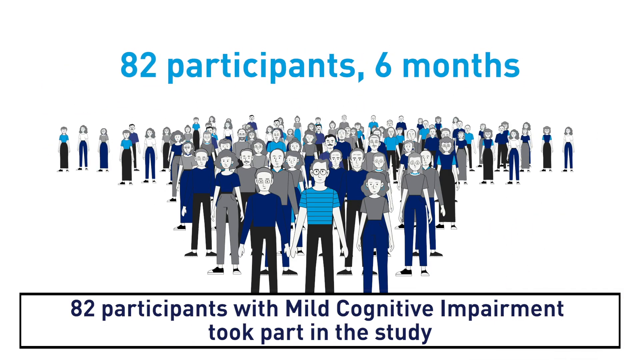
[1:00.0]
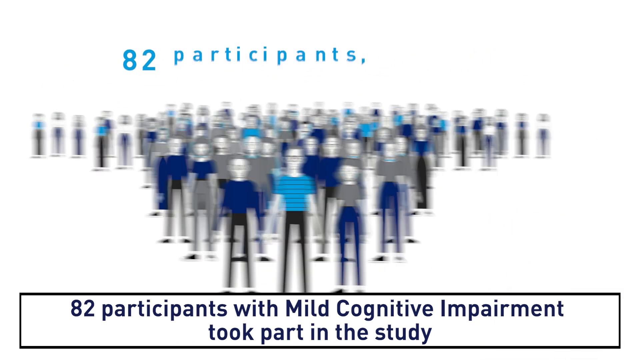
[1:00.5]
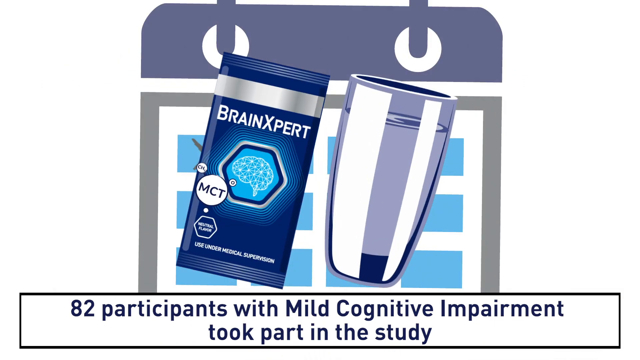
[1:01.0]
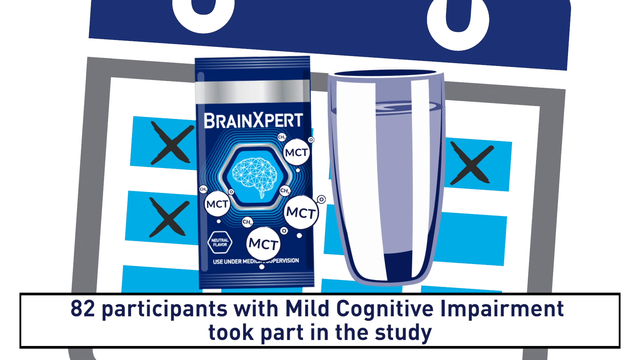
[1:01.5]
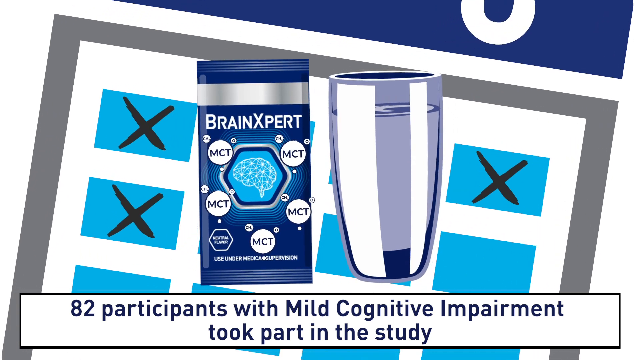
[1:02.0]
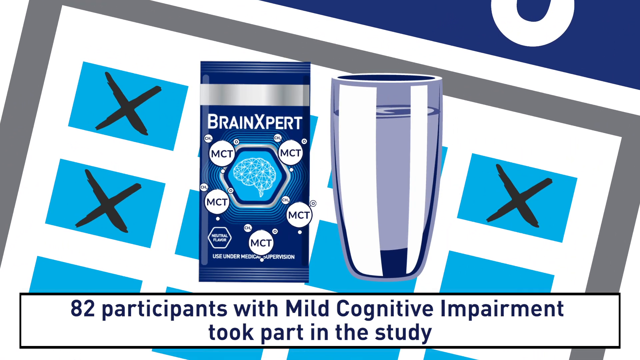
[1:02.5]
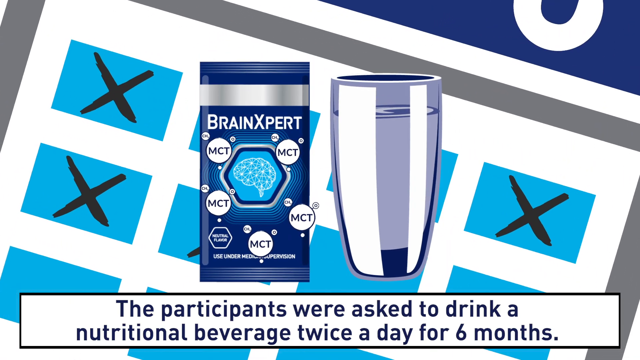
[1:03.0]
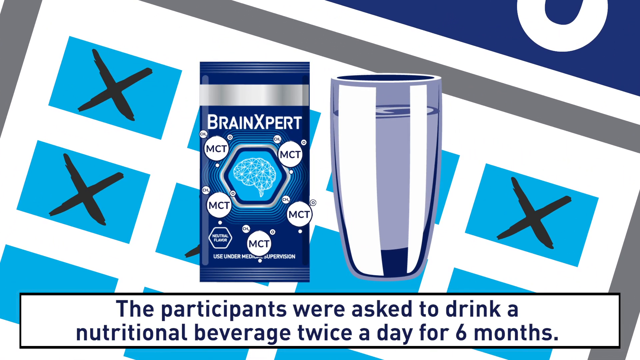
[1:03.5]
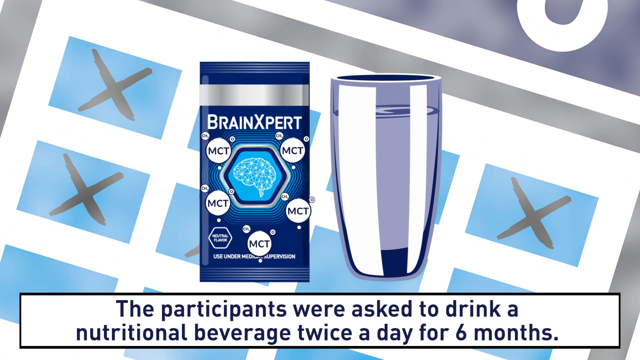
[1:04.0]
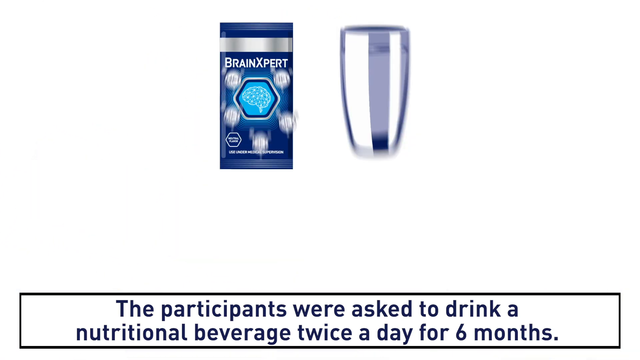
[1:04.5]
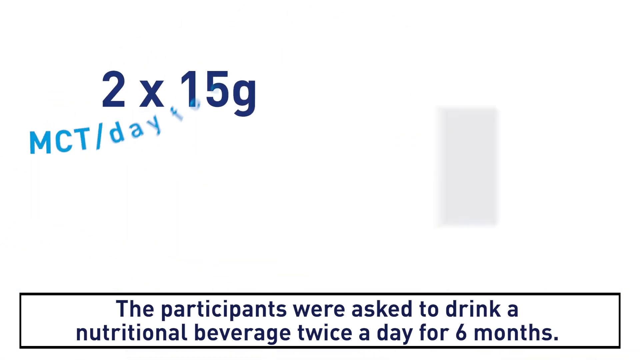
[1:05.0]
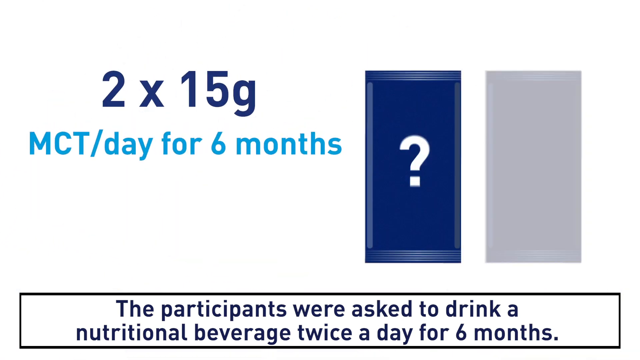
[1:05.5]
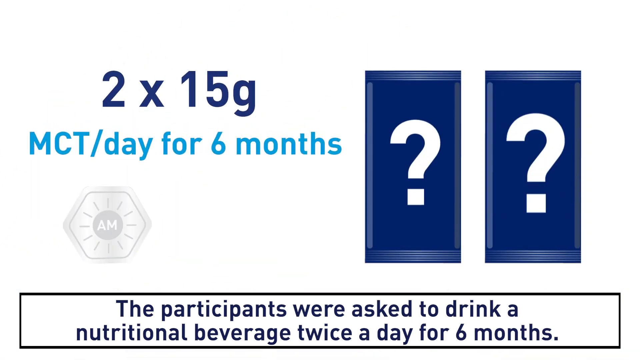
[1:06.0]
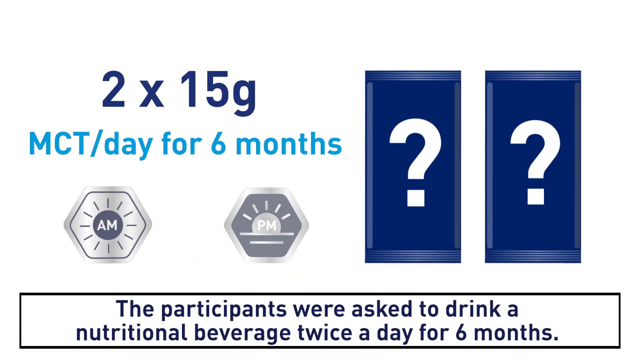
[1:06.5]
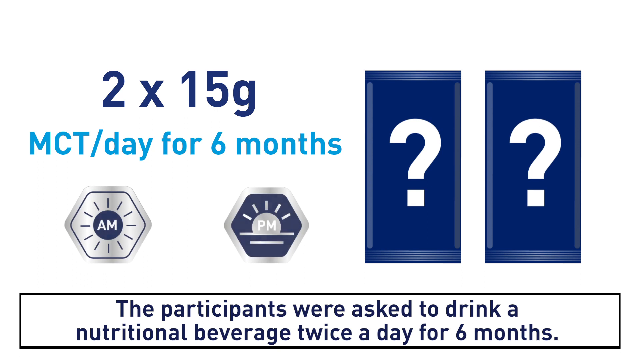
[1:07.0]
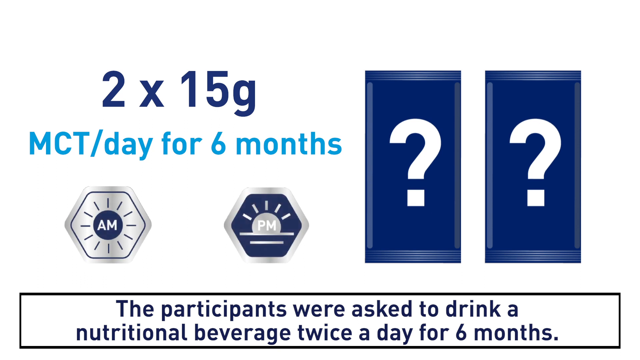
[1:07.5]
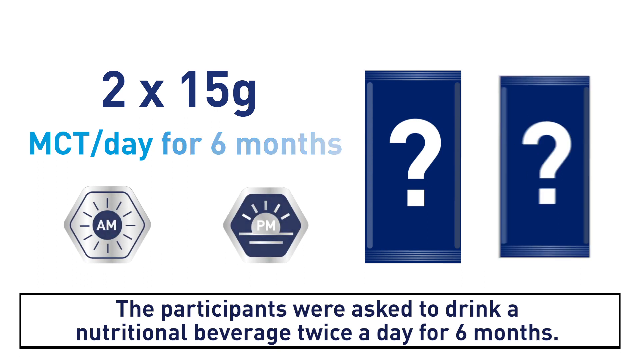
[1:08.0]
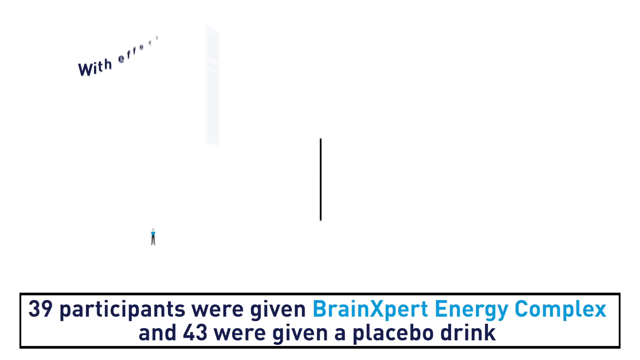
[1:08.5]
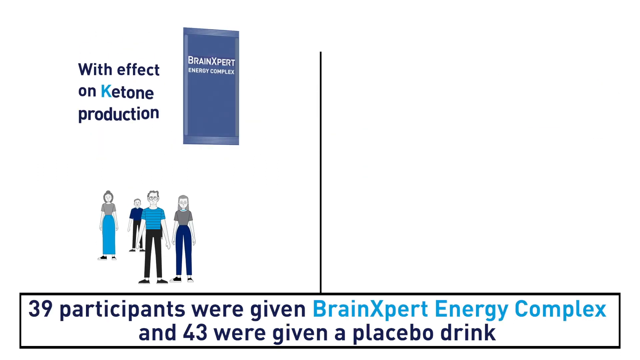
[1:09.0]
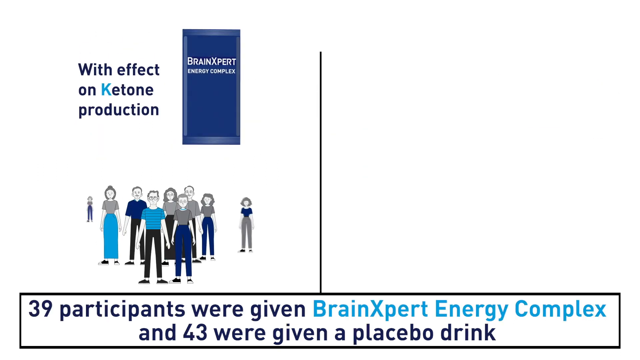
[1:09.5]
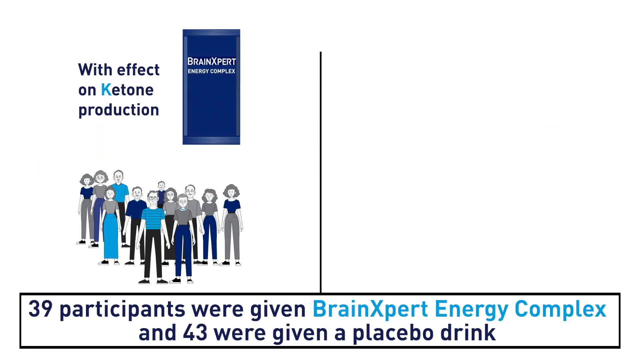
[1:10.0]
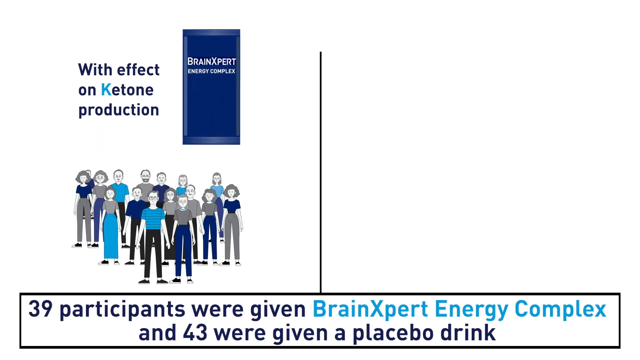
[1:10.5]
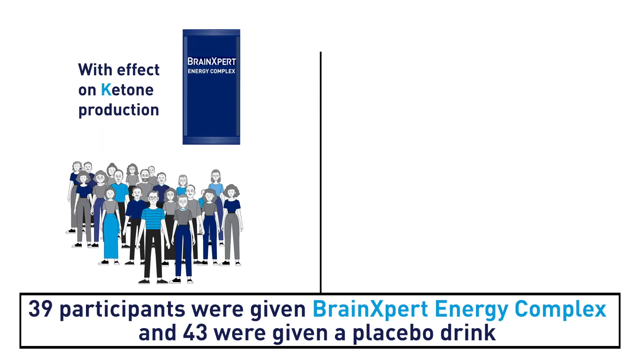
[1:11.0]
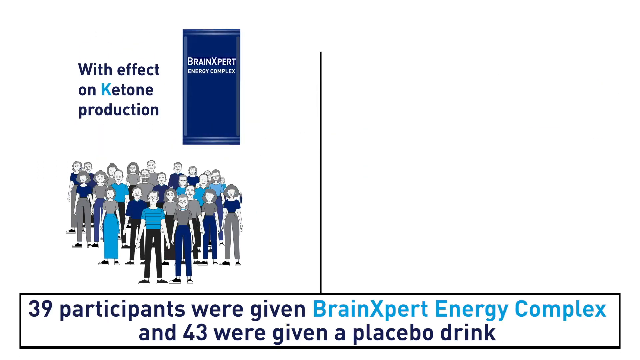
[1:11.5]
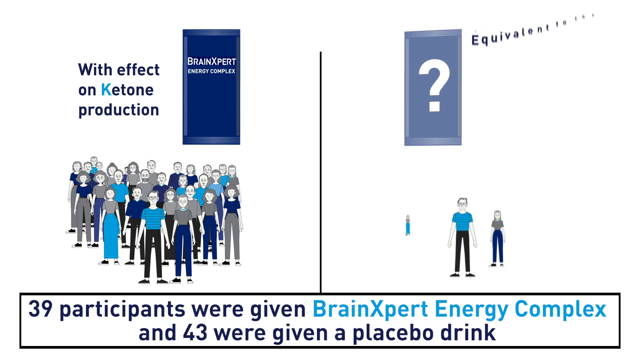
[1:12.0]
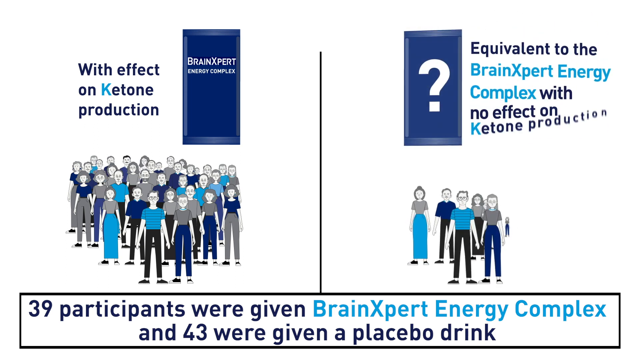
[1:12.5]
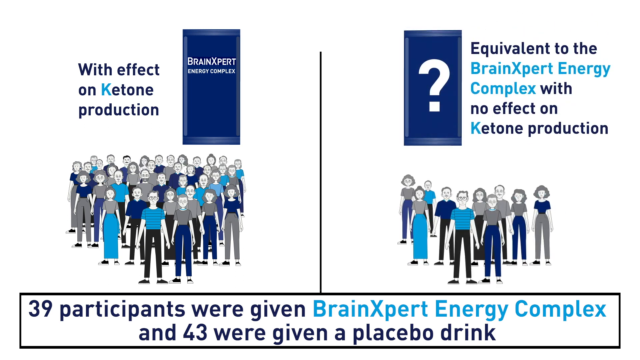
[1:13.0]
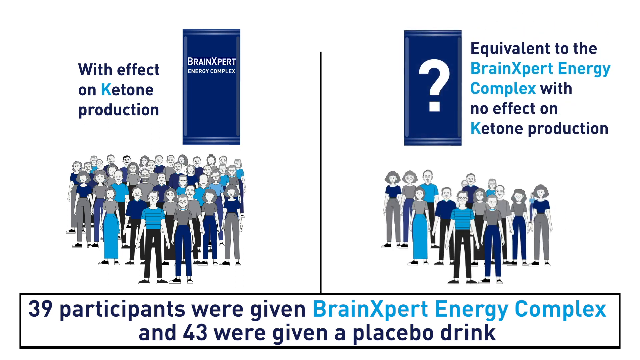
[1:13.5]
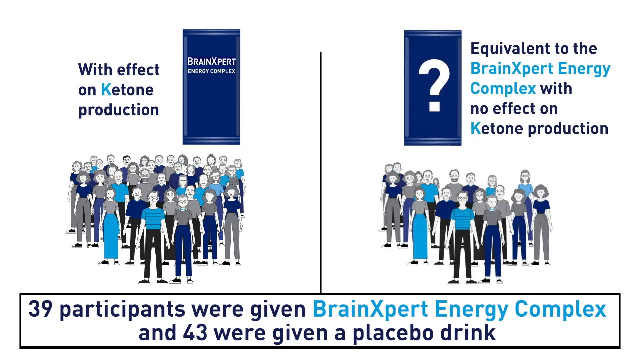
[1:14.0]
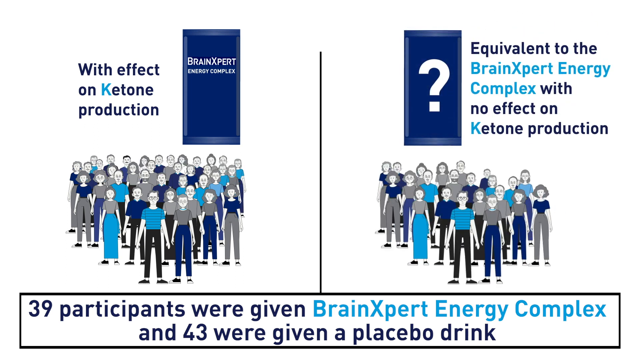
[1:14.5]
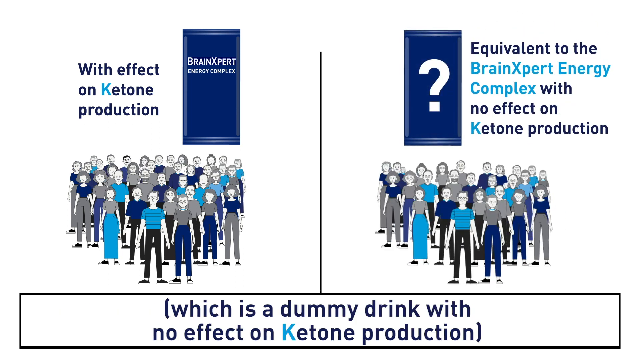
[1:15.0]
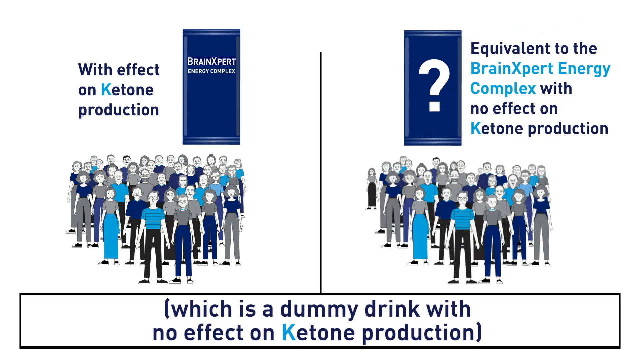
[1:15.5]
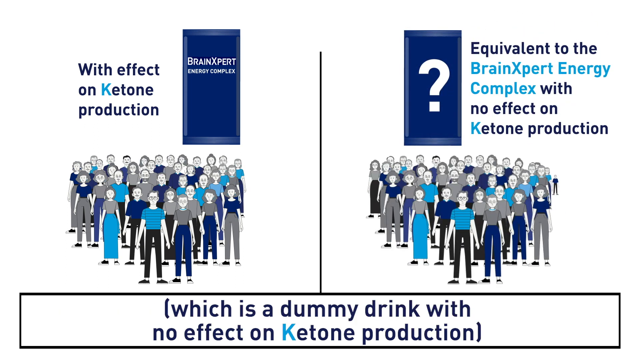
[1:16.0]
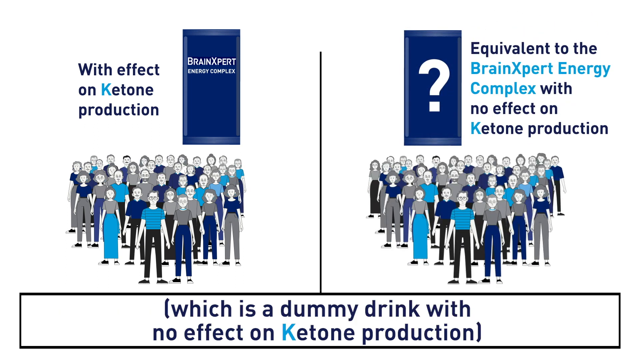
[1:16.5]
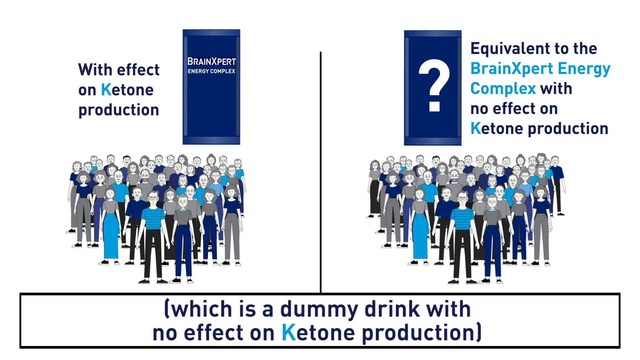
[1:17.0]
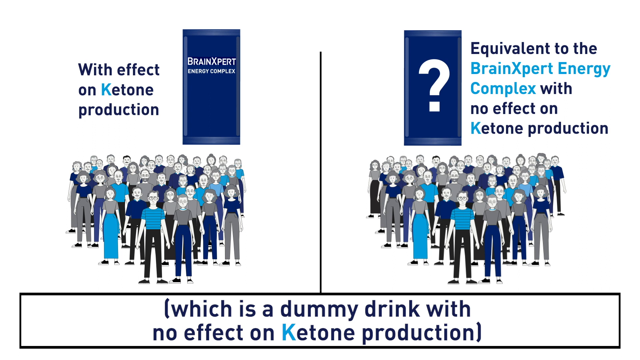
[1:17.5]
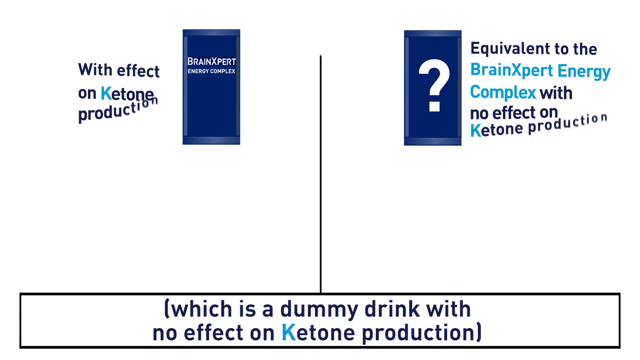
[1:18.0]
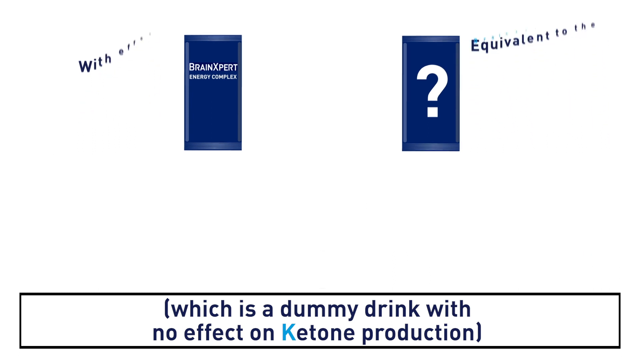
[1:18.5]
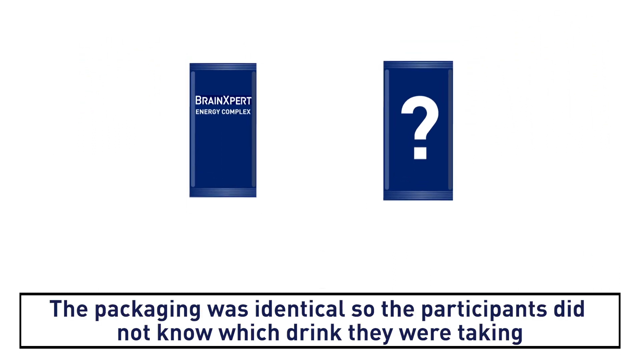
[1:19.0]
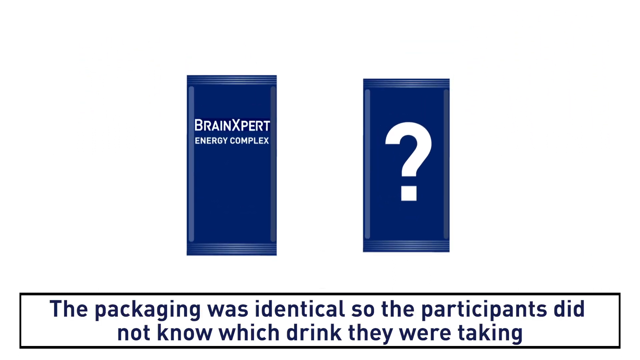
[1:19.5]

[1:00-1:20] The top of the screen says "82 participants, six months" above an image of what looks like 82 participants, with "82 participants with mild cognitive impairment took part in the study" below. The people zoom out of the way and are replaced by a Brain Expert package, blue and silver, whose cover shows MCT in a circle with three circles around it and hexagons; to the right is a glass of water, and behind it is what looks like a calendar with X's on each blue square. The next slide shows the text "2 times 15 grams" with "MCT per day for six months" below it. Below that are an AM and a PM; the AM is highlighted and the PM is grayed out. To the right are two blue and gray rectangles, each with a question mark. The bottom text reads "the participants were asked to drink a nutritional beverage twice a day for six months", and then the PM is highlighted too. Everything moves to the side. The next screen's bottom text says "39 participants were given brain expert energy complex and 43 were given a placebo drink". On the left appears "with effect on ketone production", and ten people appear on the left side, growing in number until there are about 40 or 50, maybe 39. On the right the same thing happens as people appear, with the text "equivalent to the brain expert energy complex with no effect on ketone production".